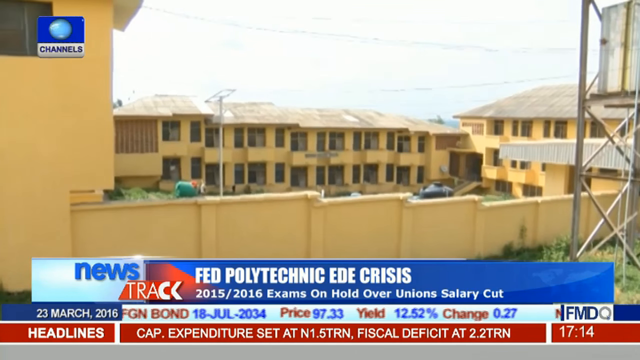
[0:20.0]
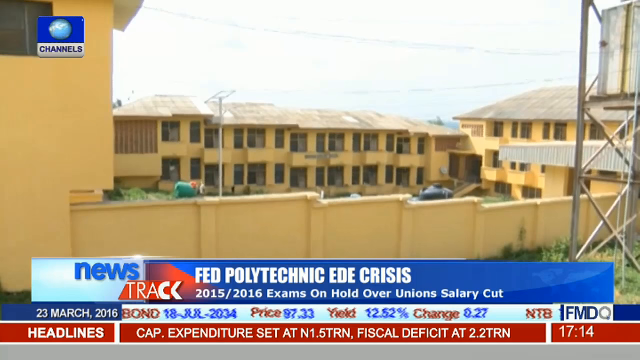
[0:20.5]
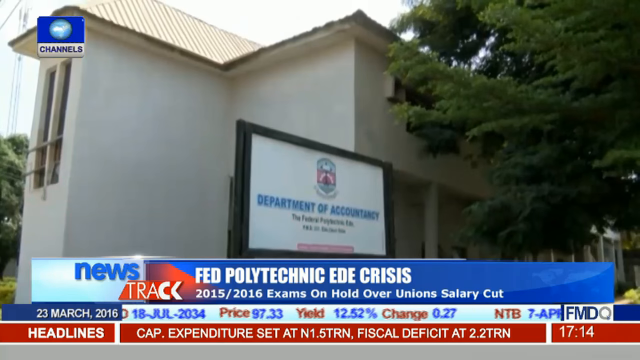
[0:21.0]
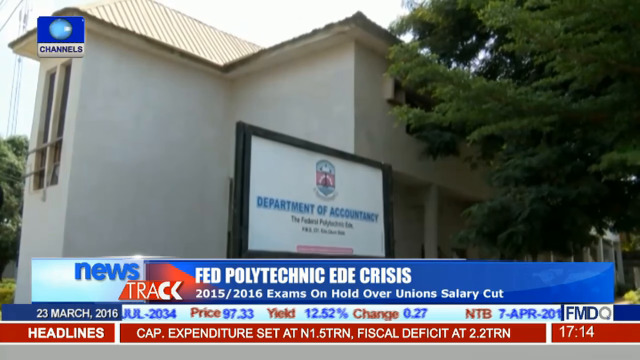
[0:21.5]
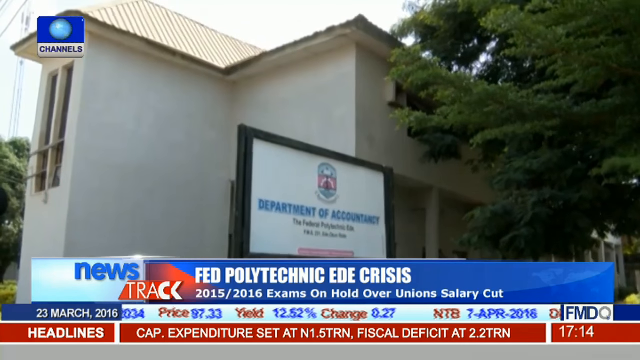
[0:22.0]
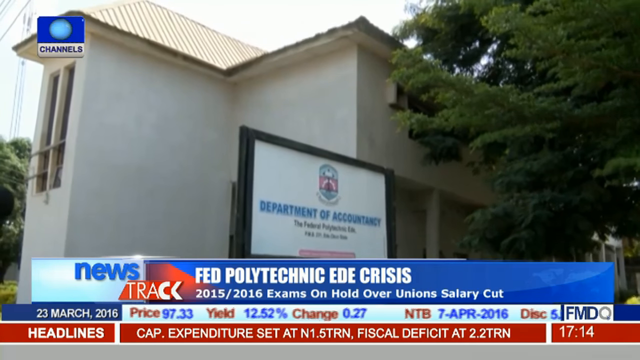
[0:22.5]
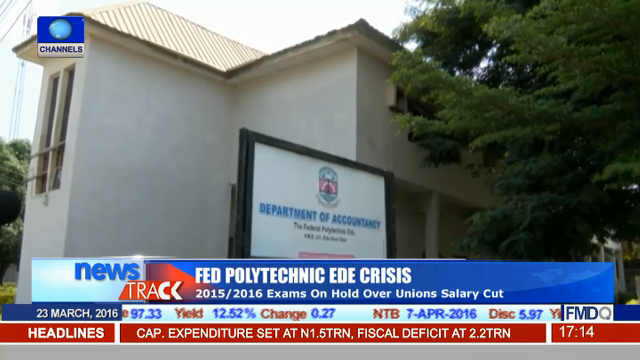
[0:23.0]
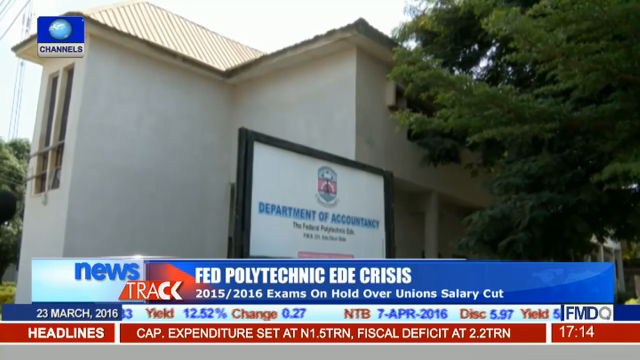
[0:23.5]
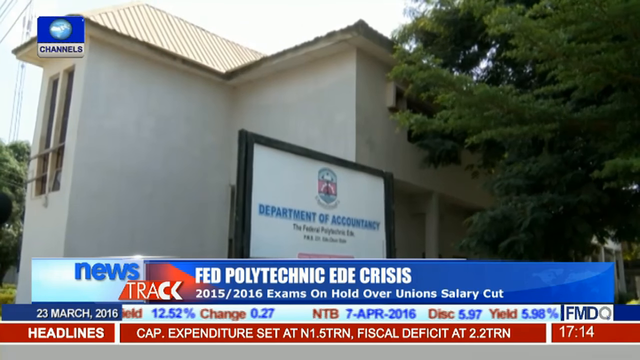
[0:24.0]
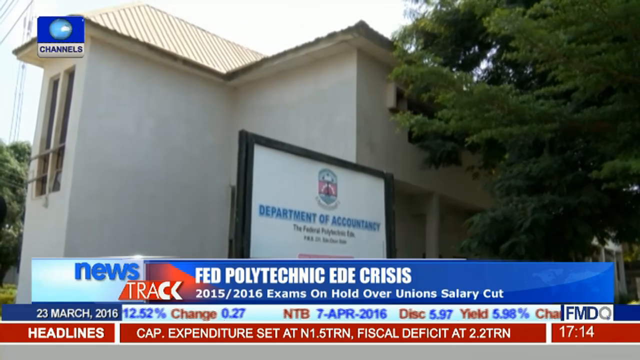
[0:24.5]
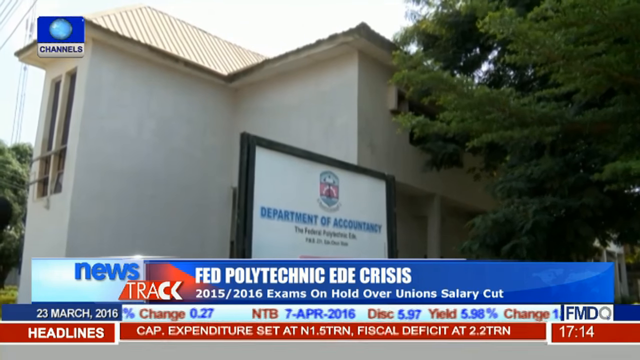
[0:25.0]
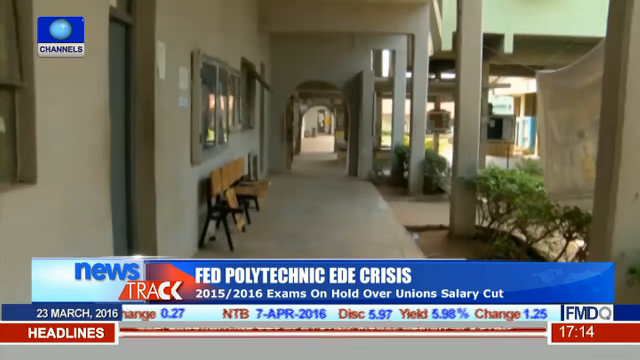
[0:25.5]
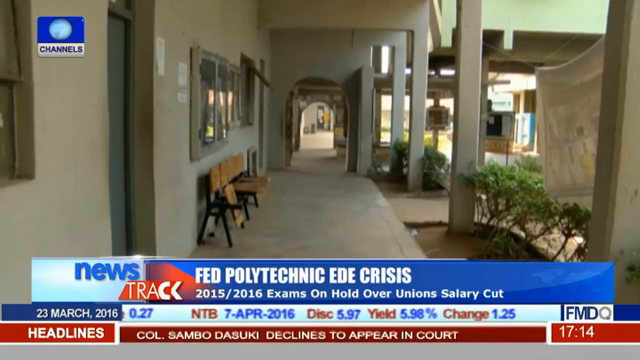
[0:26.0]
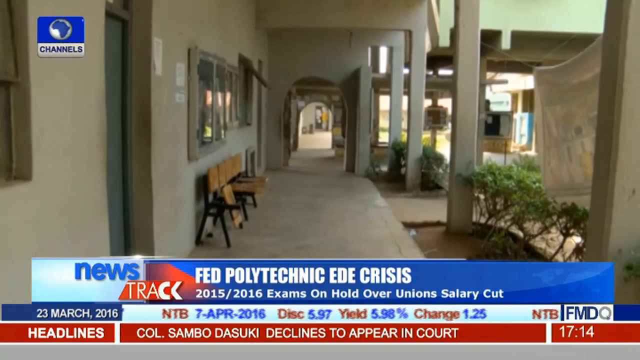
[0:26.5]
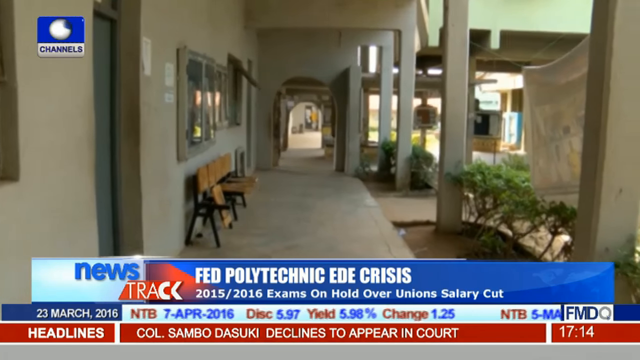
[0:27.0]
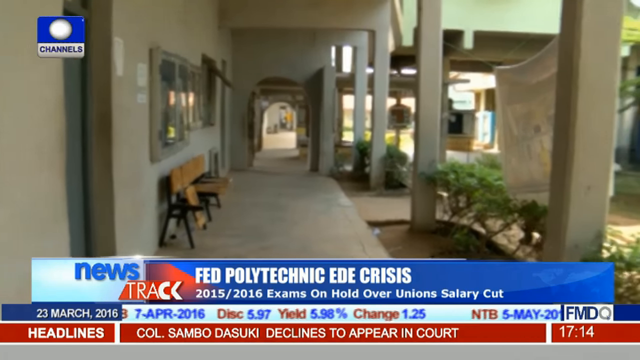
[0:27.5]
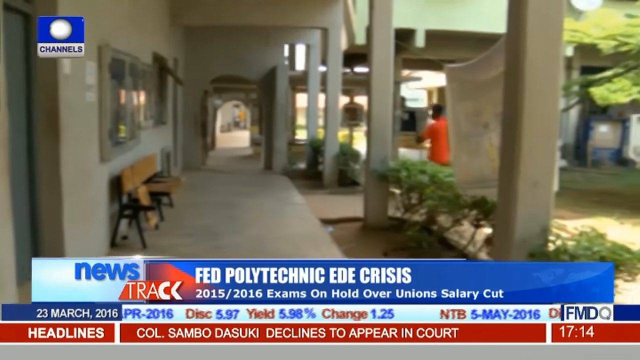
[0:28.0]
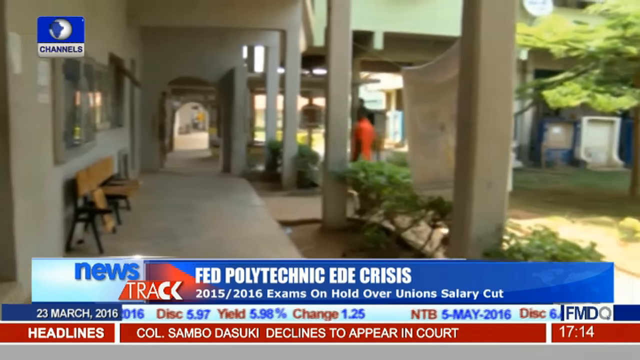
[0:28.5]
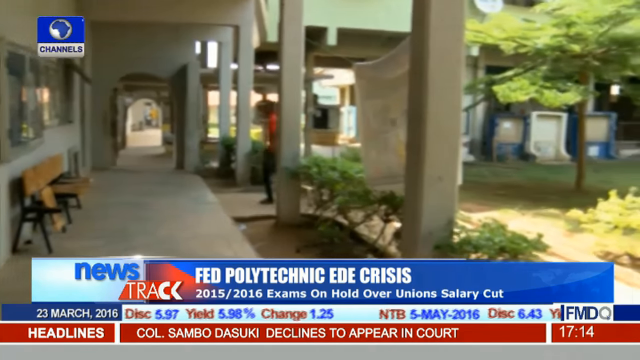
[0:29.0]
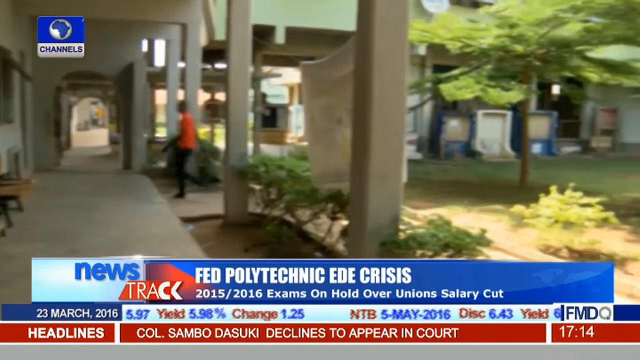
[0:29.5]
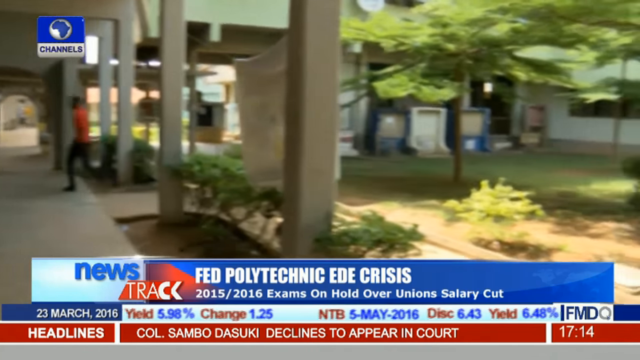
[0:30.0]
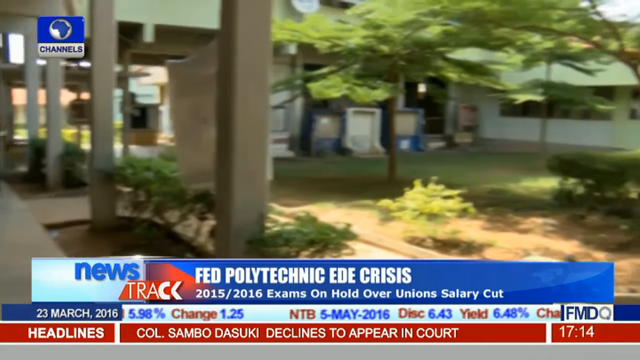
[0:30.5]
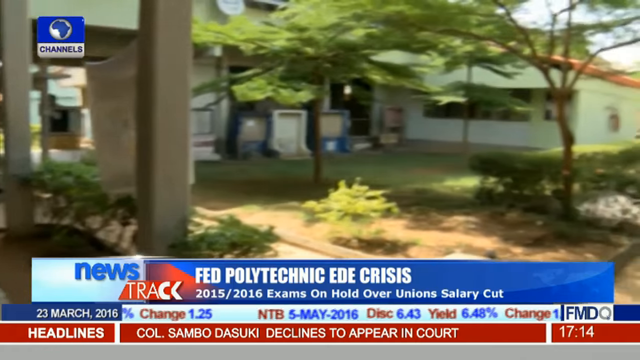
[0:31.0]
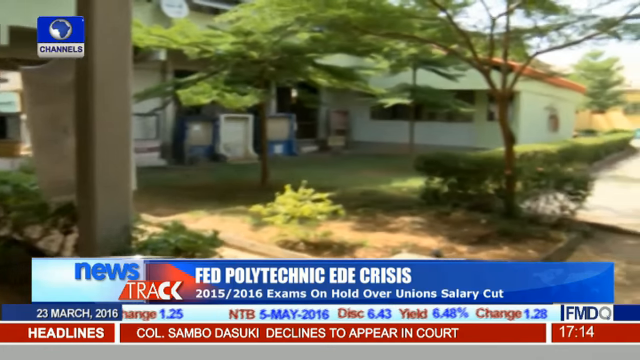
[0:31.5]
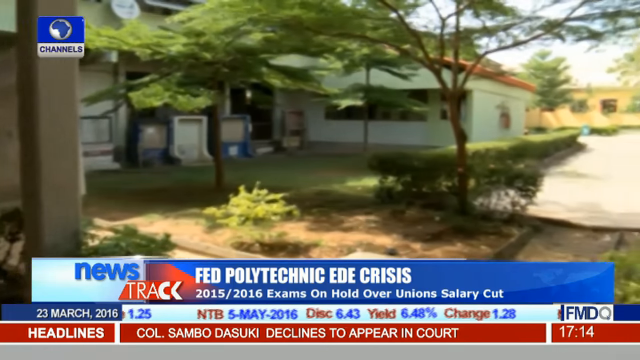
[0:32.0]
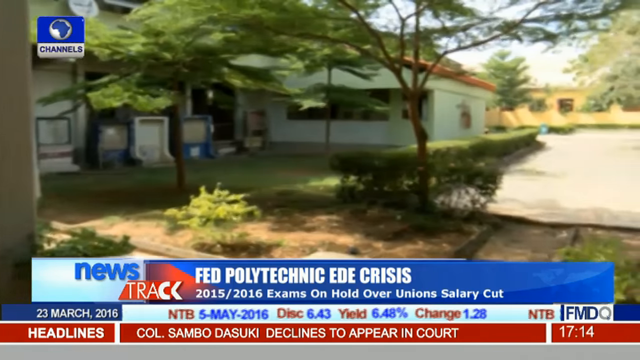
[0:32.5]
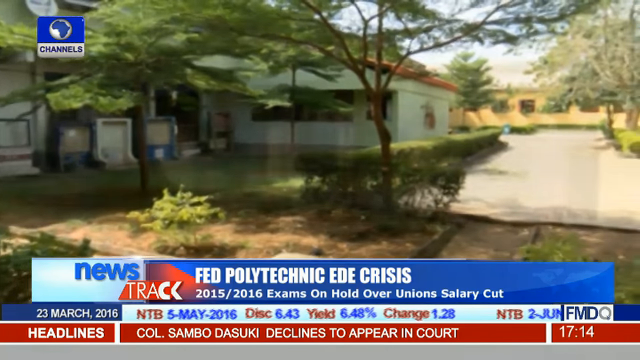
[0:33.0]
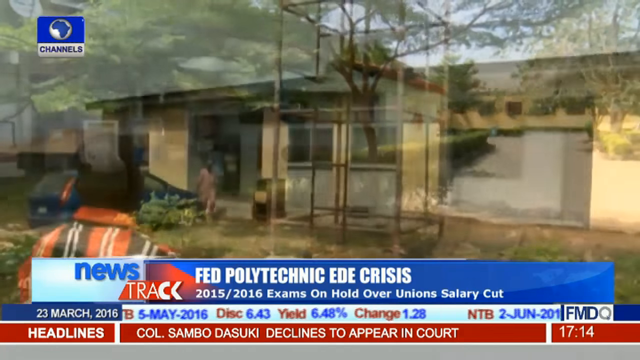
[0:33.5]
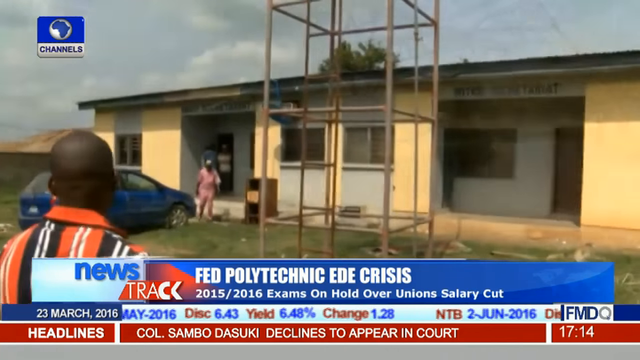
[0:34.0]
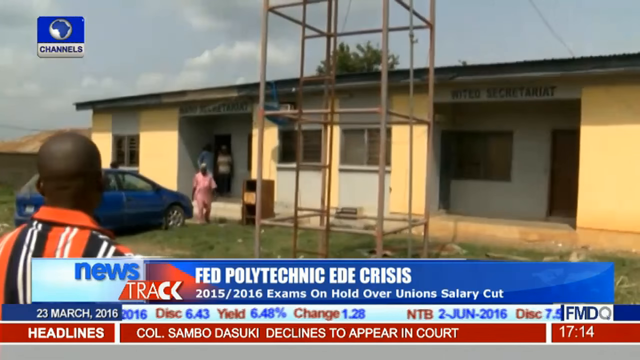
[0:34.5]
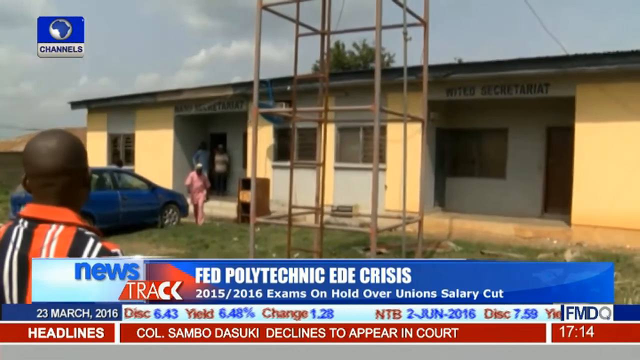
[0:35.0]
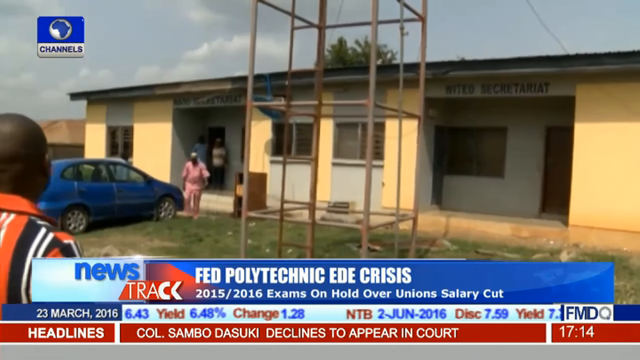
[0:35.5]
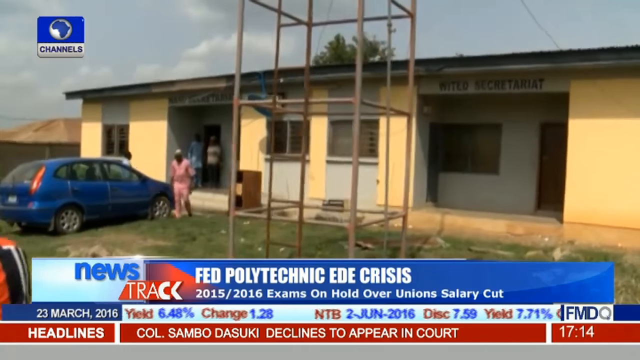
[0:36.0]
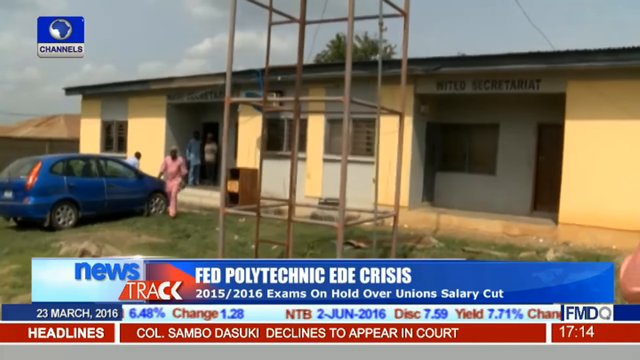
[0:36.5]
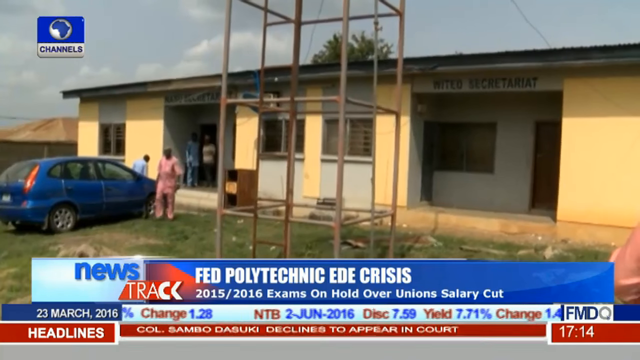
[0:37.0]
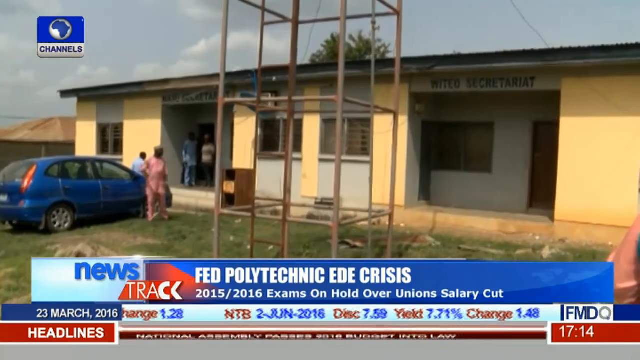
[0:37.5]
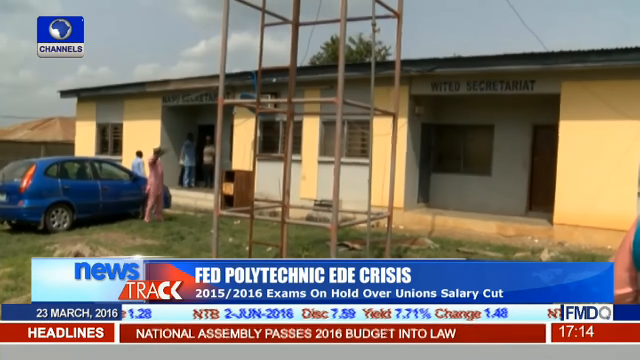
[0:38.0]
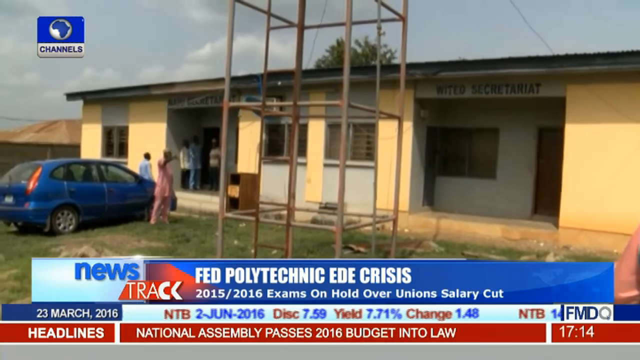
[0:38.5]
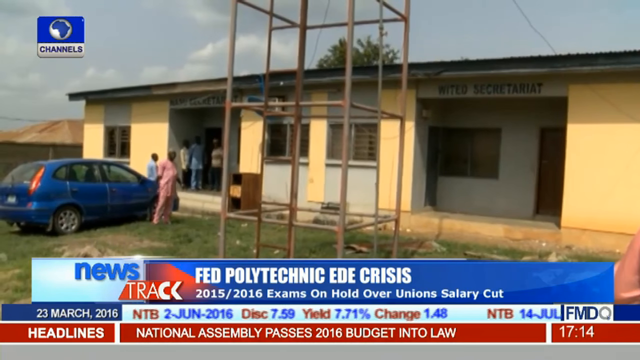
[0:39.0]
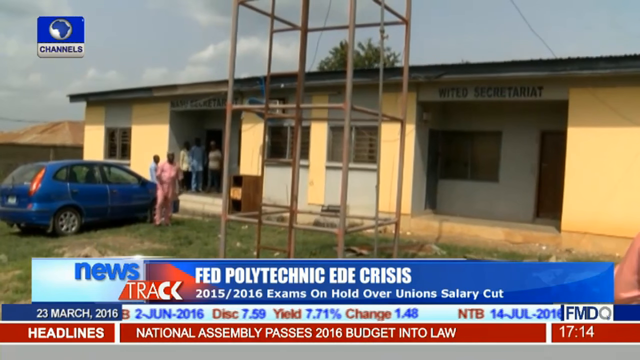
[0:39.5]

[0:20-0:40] A shot of the yellow apartment complex with the high wall around it changes to footage of the Department of Mountains, a white building with a large tree around it. The courtyard of this building is very clean and made of cement, with some plants on the right side and some benches on the left side along the building wall. The walkway looks cool and clean. The camera pans to the right as a young man walks into the shot, revealing African vegetation on the right with dirt and grass. The courtyard has an array of vegetation and is green with trees. The shot then changes to another building, a yellow one, where people walk out near a blue car, looking as if they might be upset.